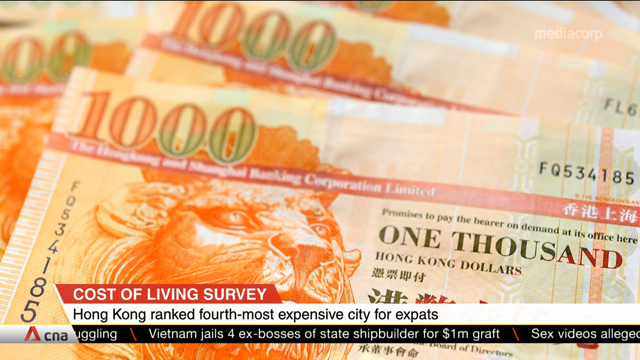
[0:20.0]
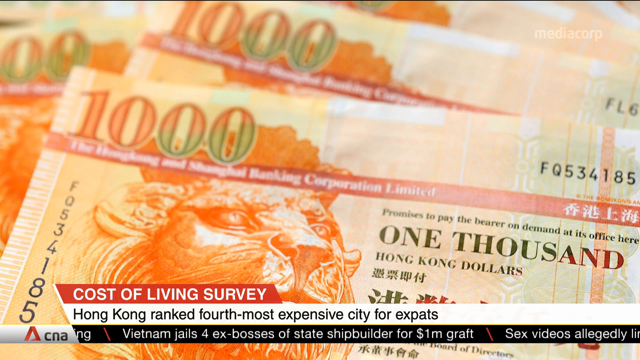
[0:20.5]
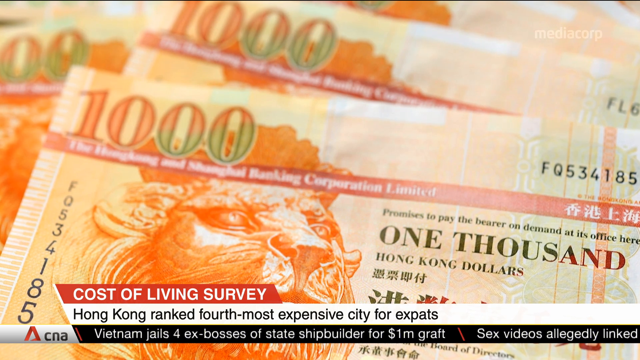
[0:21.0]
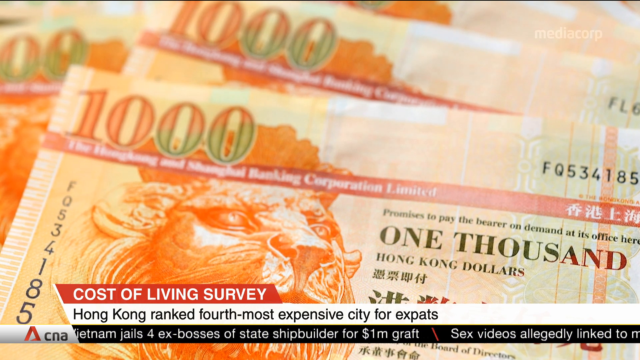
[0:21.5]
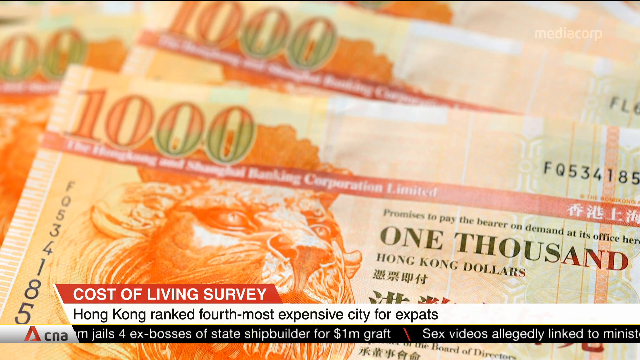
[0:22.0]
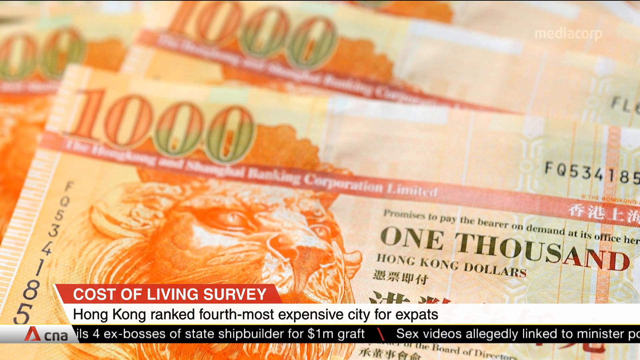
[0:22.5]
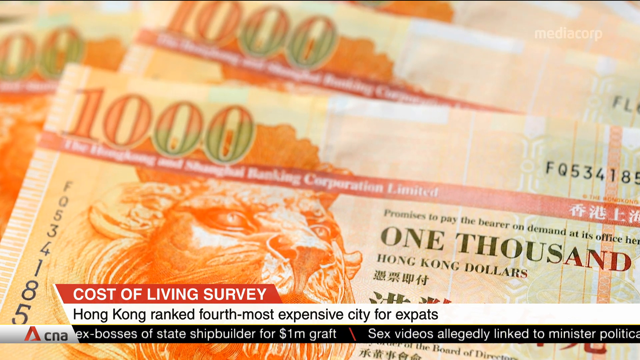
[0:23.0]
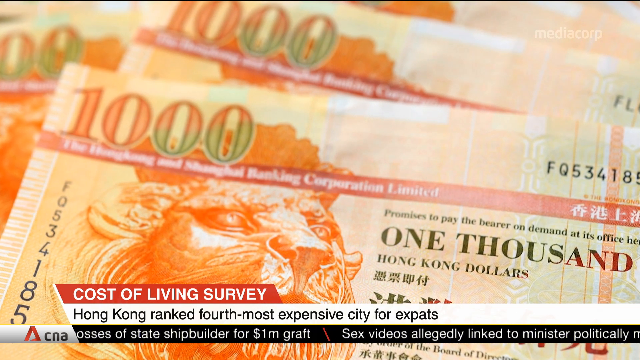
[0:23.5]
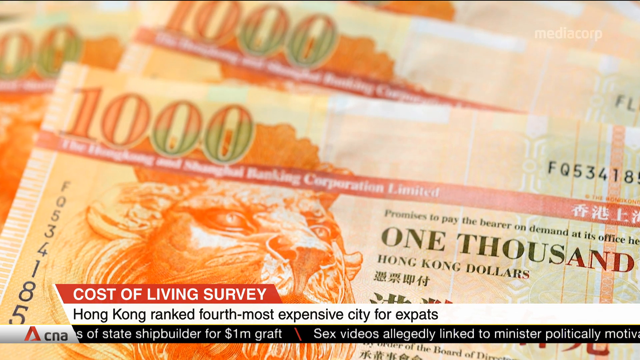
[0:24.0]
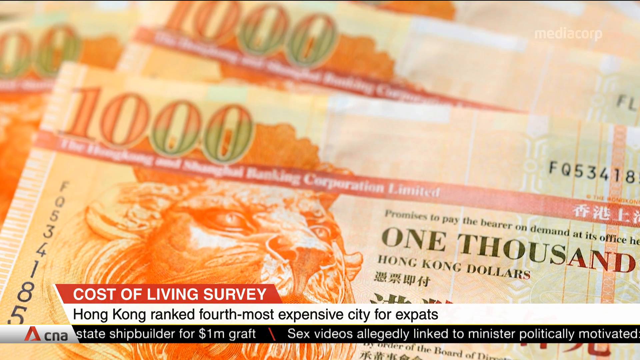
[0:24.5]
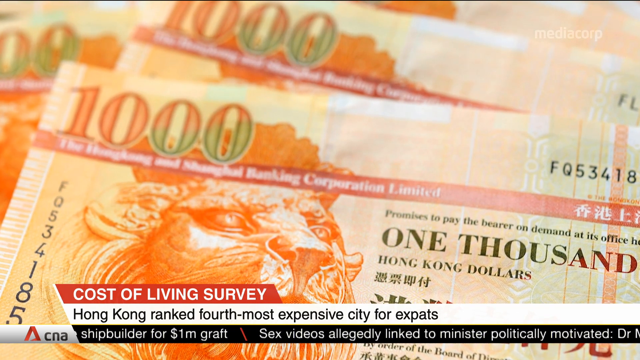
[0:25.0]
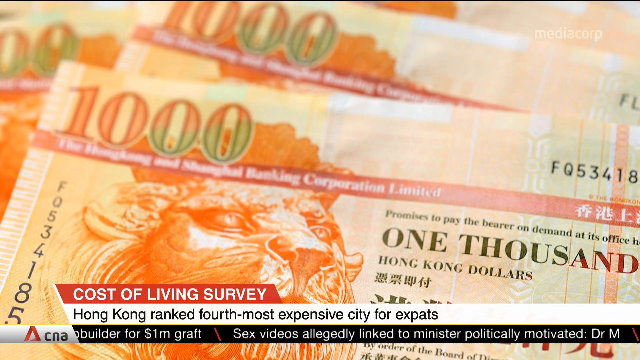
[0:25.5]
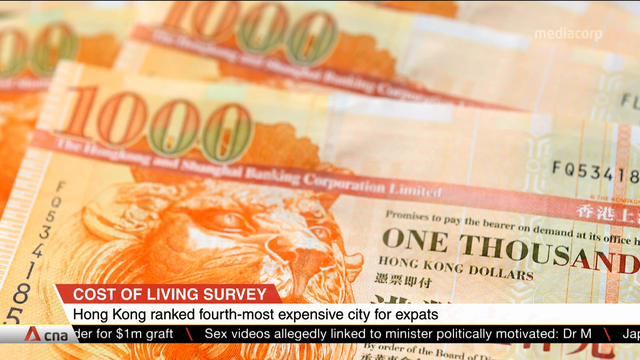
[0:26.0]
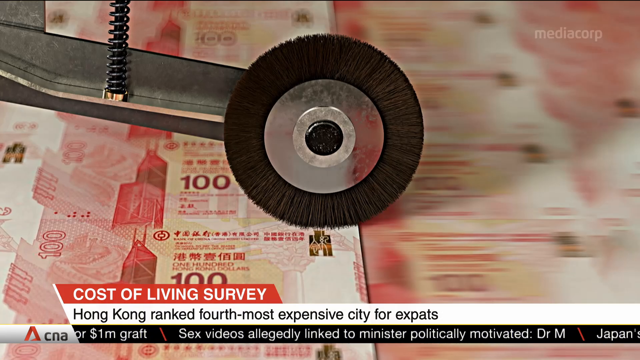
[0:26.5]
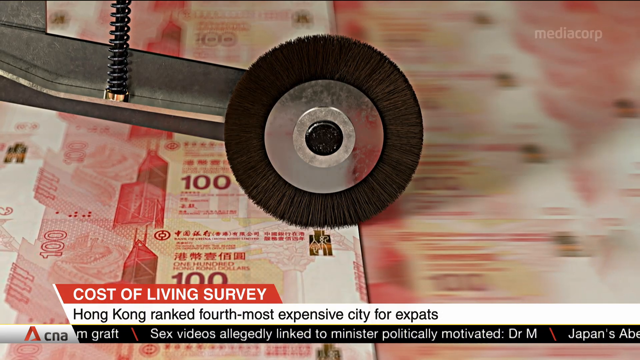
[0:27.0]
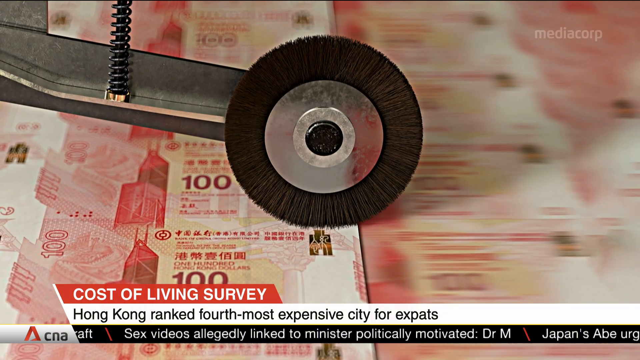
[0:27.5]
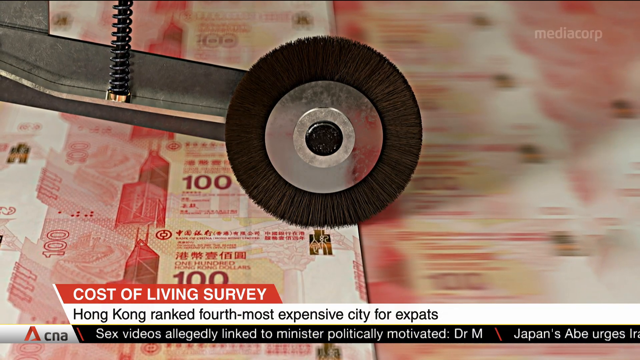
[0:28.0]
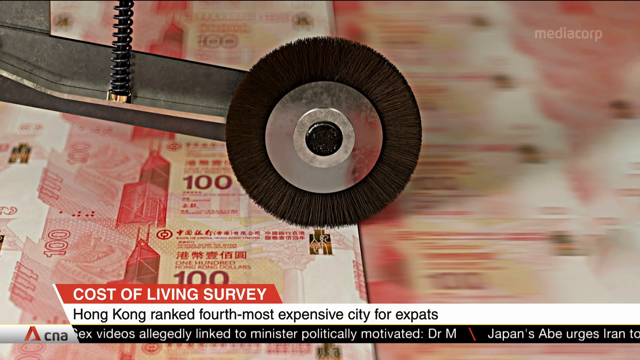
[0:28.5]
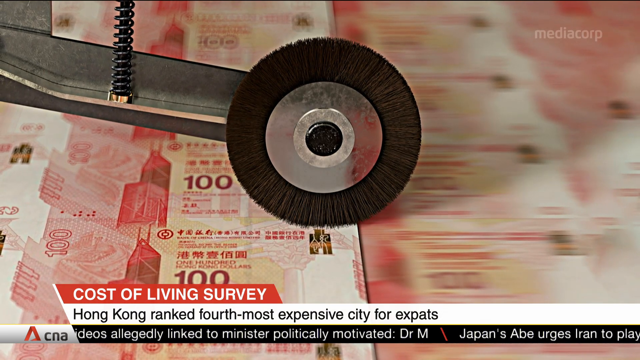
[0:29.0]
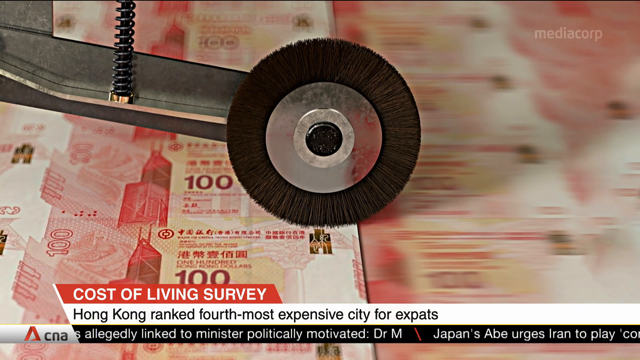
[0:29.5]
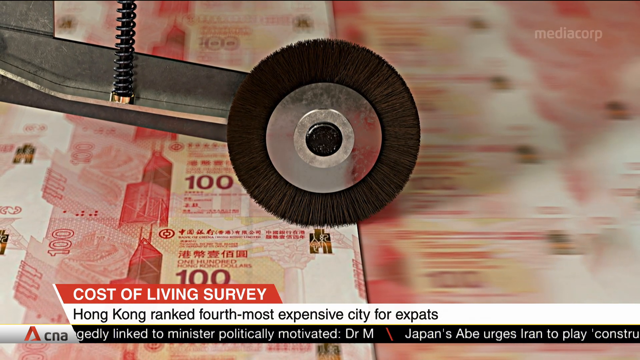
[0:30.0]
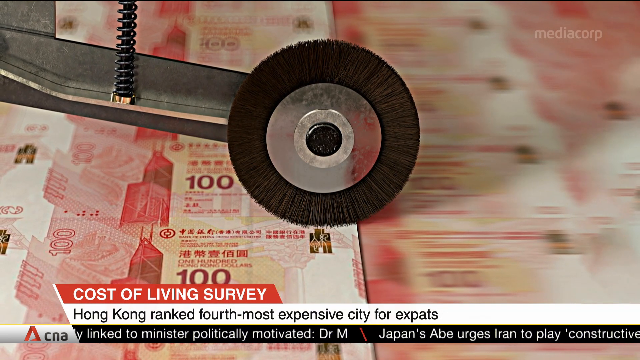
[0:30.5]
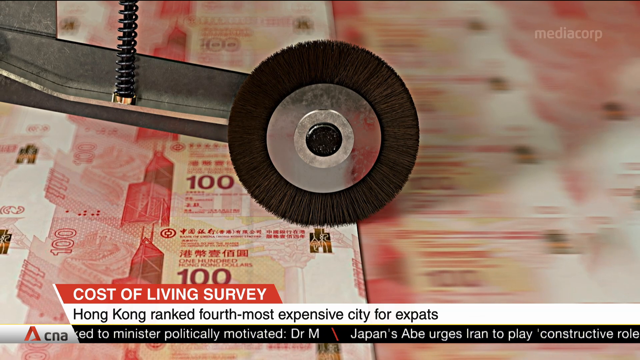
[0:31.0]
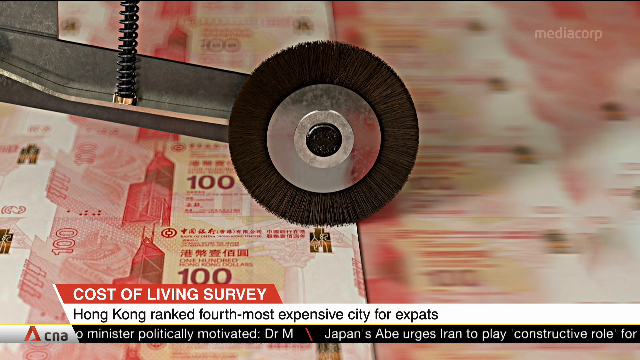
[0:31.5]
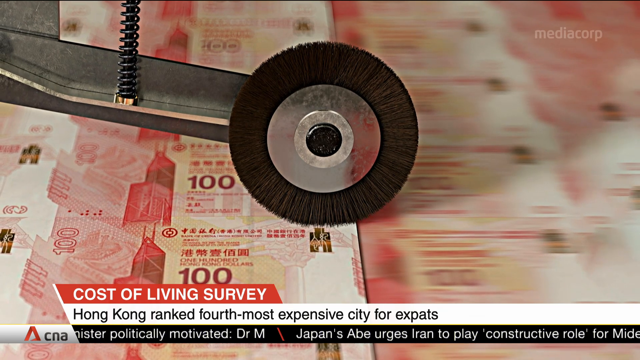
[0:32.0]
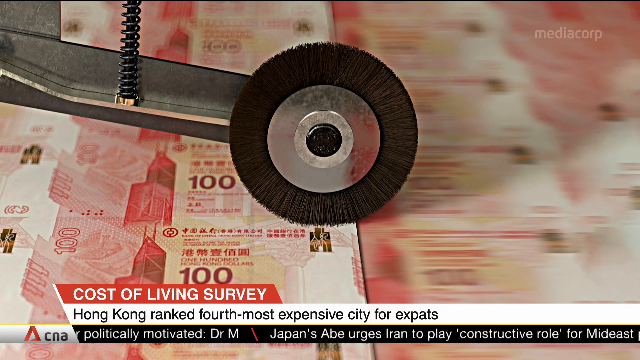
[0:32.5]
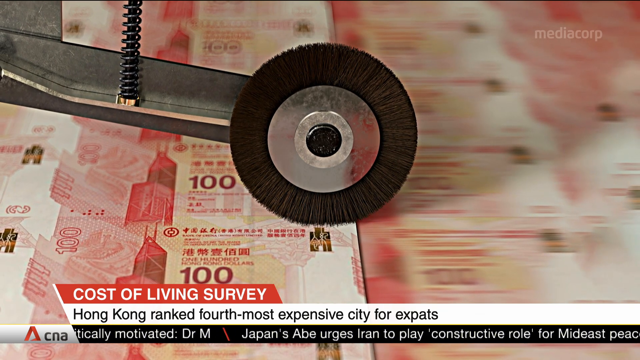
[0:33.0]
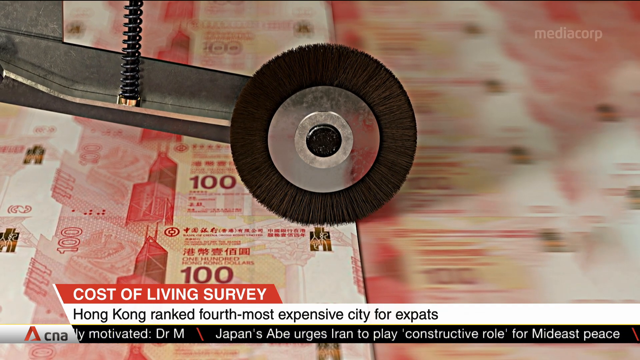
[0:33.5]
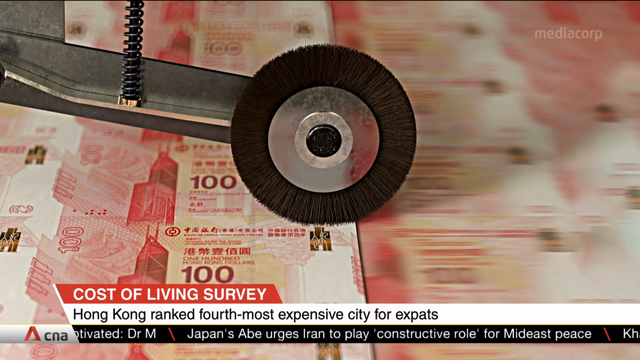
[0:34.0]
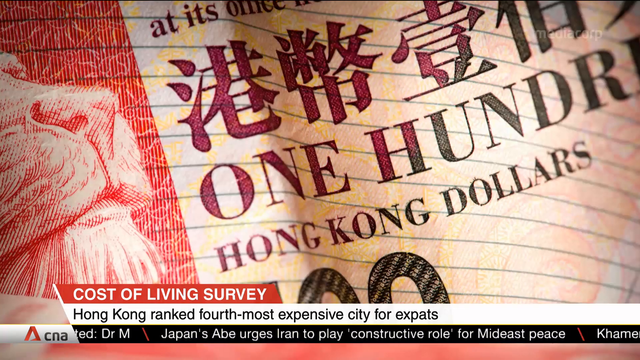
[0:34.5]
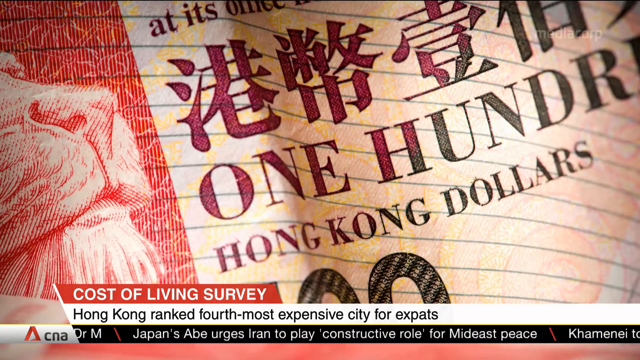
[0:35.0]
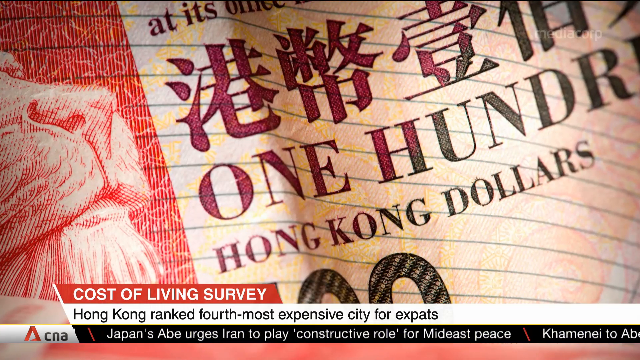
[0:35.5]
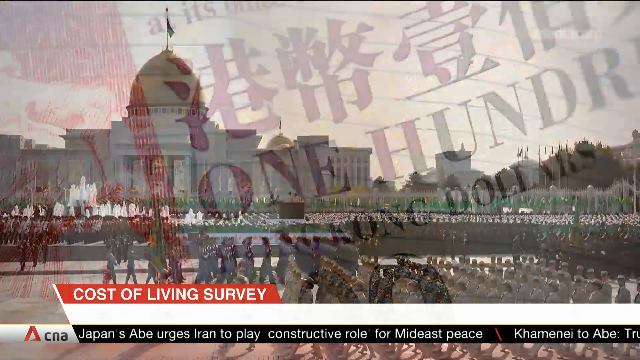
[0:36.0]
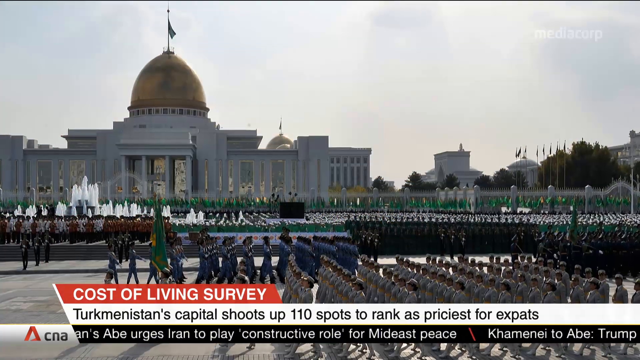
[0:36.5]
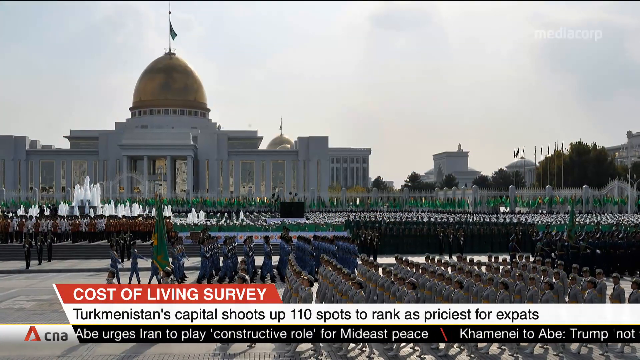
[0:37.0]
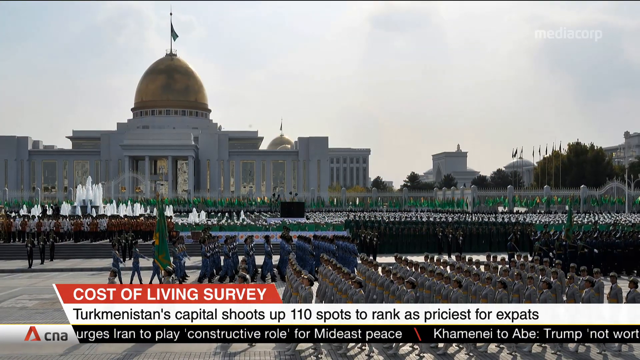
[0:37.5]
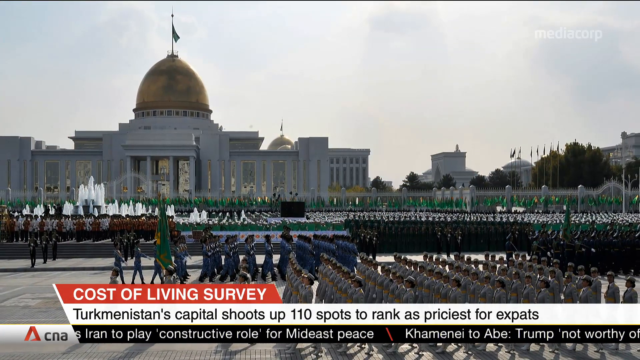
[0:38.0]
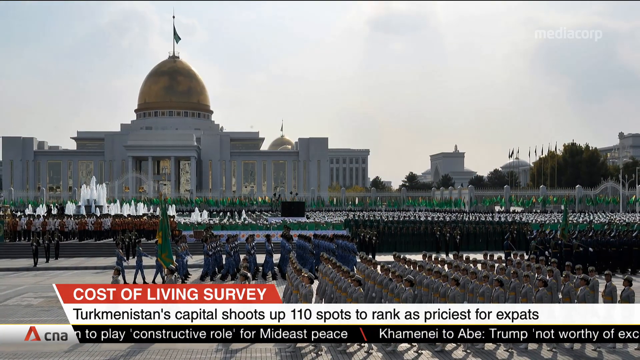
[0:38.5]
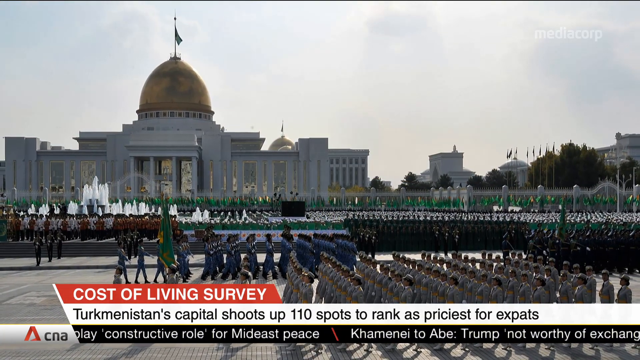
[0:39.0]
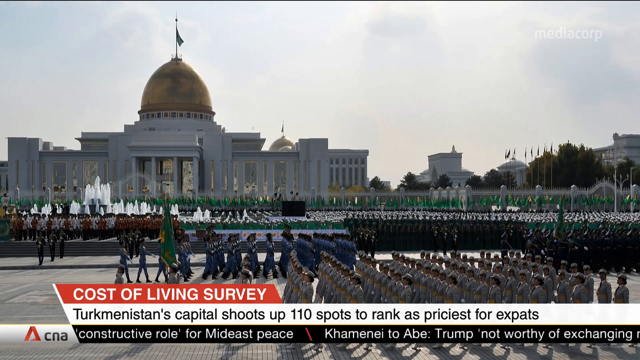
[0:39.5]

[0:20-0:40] The 1,000 Hong Kong dollar note is shown as the camera moves closer to it, followed by a 100 Hong Kong dollar note that has an eye on it. The writing on the money is in English and apparently also in Chinese or Japanese. A city, apparently Hong Kong, is shown, with a lot of people standing outside a building. The name Media Corp, possibly the company that filmed the footage, appears. News headlines run underneath, including one about a capital that "shoots up to 110 spots" and another reading "sex videos allegedly linked to minister politically motivated dr m", while the cost of living survey in Hong Kong is still shown.